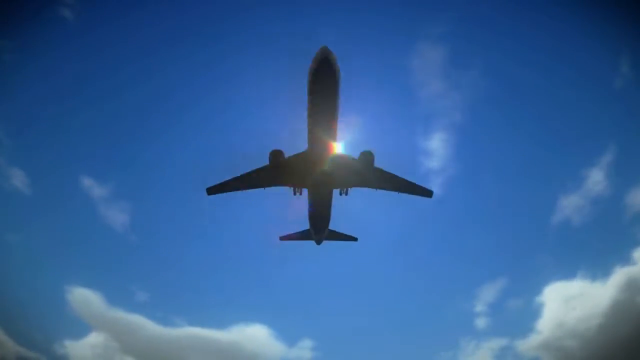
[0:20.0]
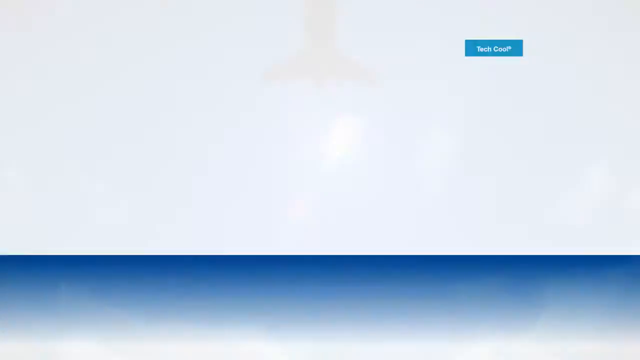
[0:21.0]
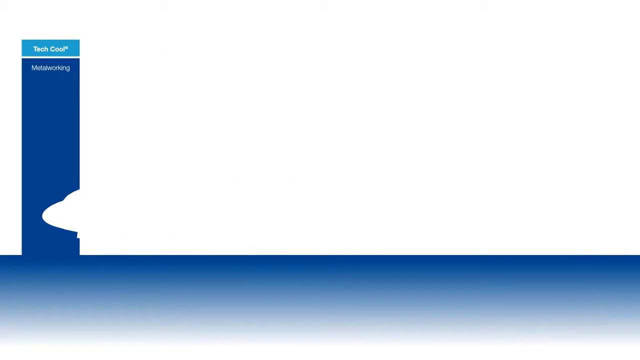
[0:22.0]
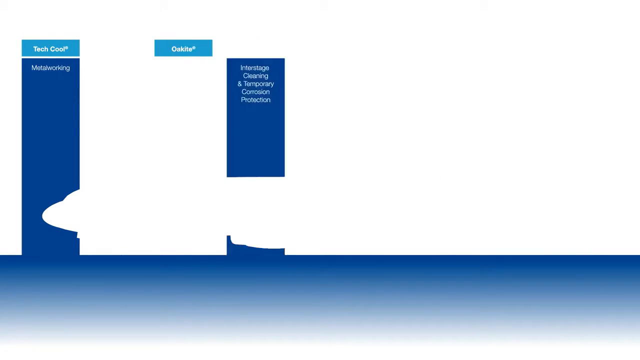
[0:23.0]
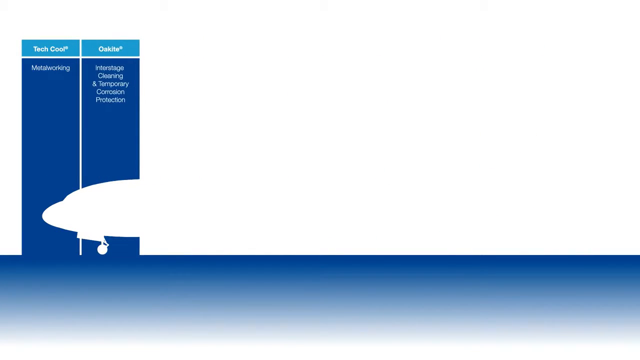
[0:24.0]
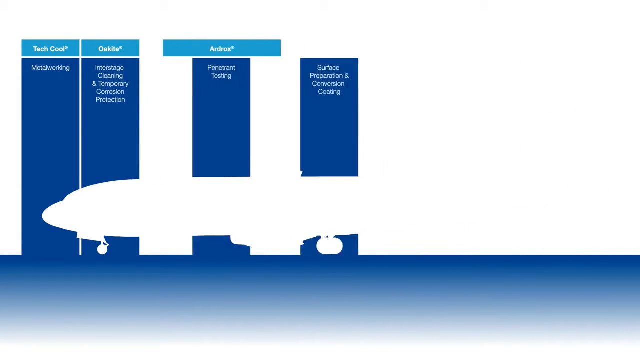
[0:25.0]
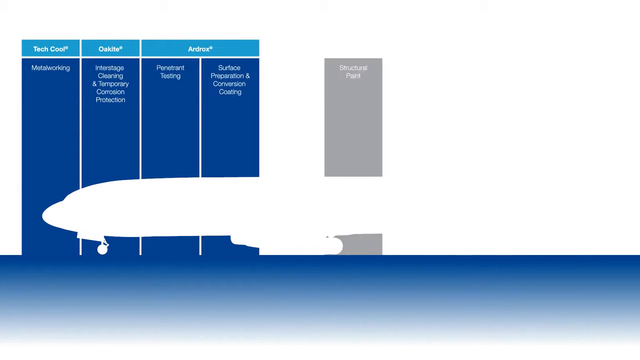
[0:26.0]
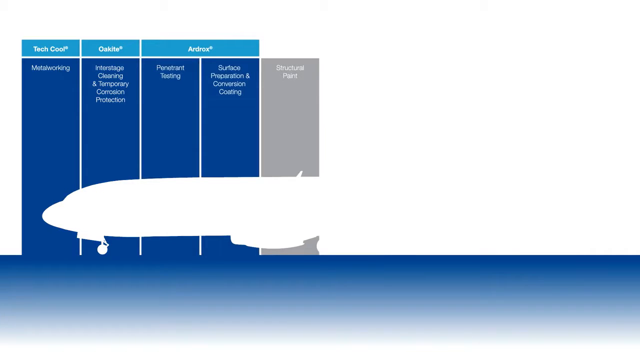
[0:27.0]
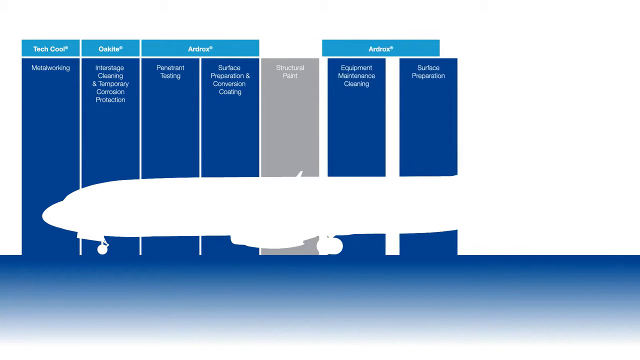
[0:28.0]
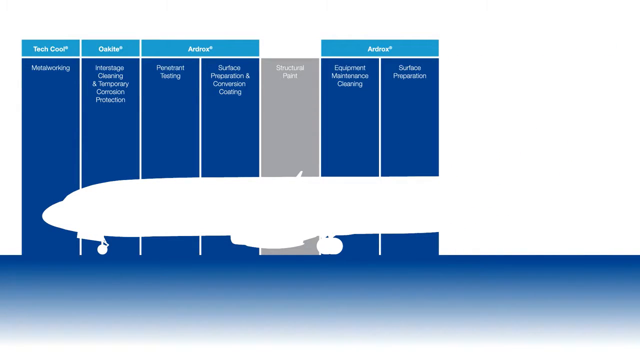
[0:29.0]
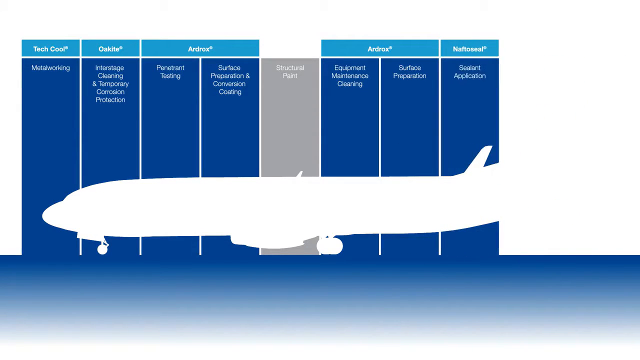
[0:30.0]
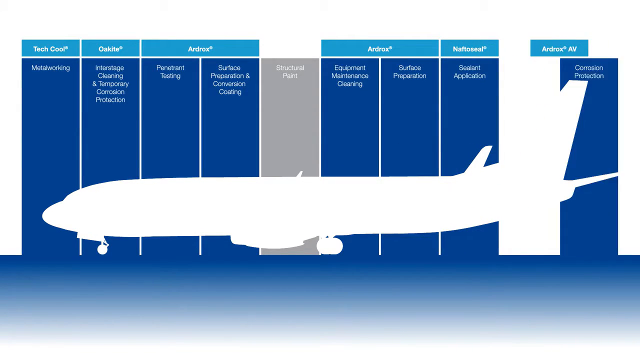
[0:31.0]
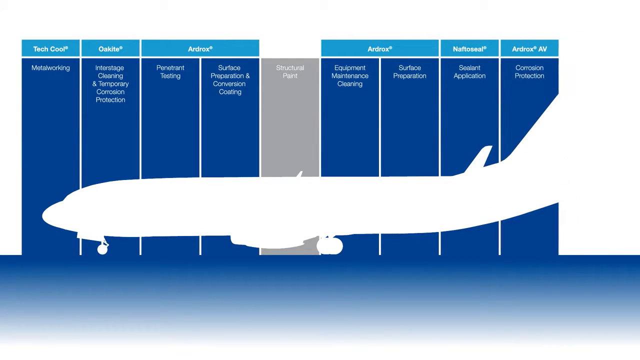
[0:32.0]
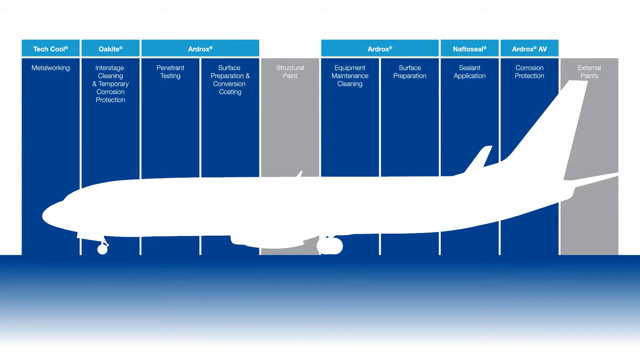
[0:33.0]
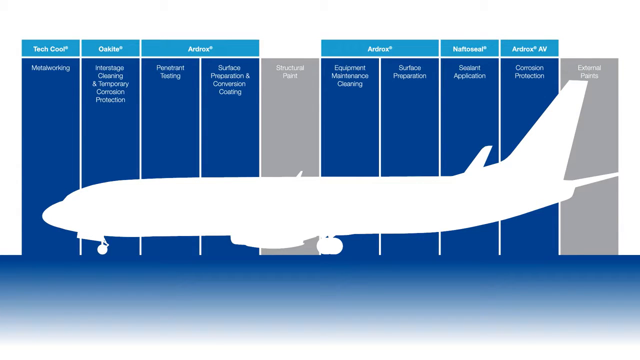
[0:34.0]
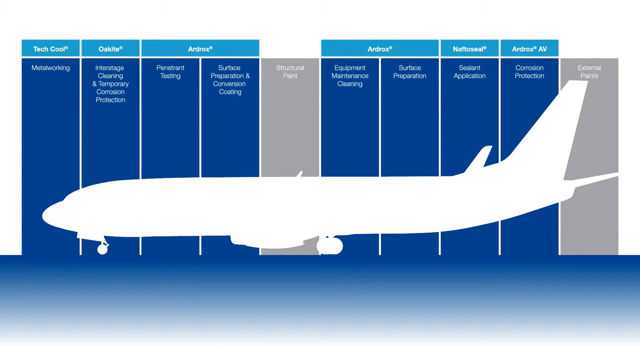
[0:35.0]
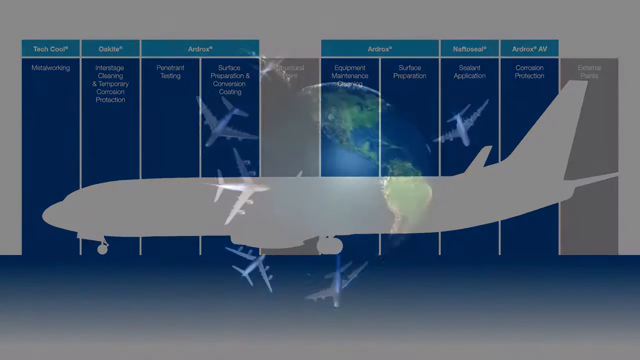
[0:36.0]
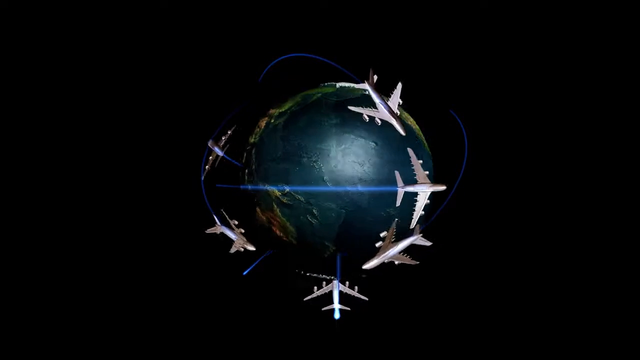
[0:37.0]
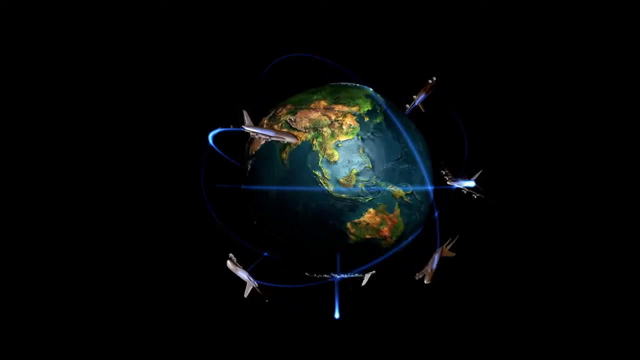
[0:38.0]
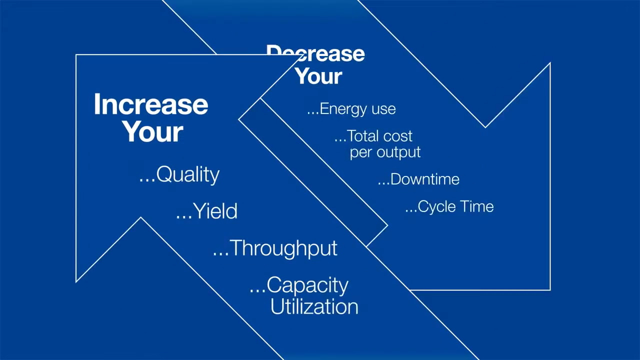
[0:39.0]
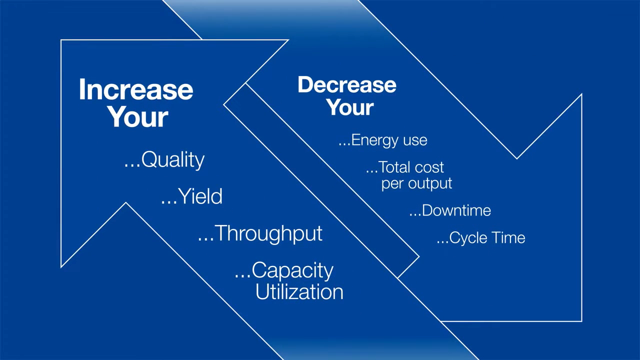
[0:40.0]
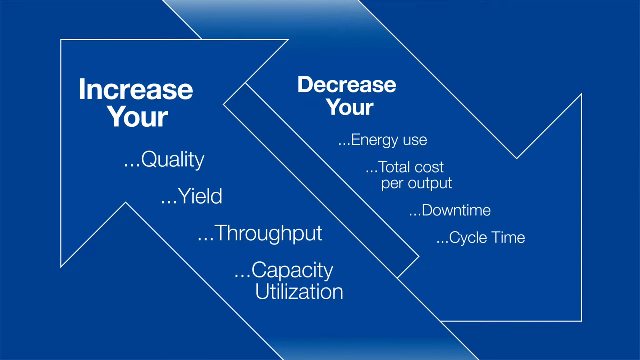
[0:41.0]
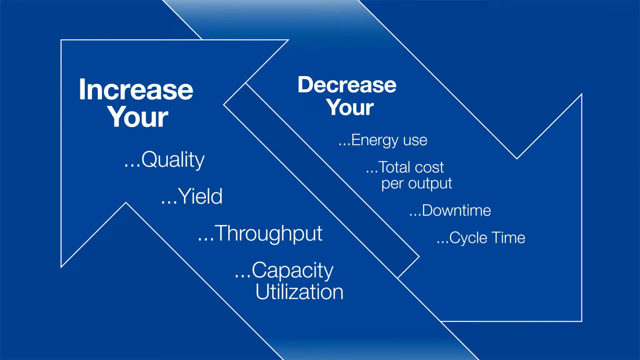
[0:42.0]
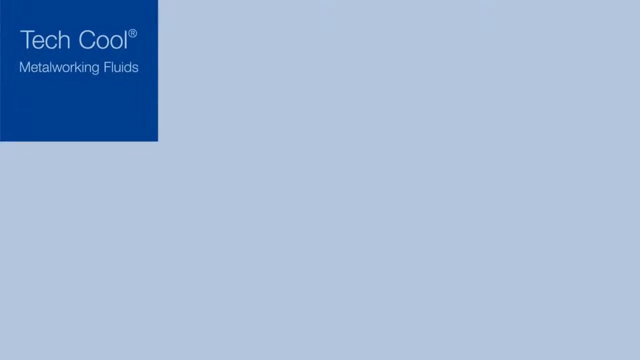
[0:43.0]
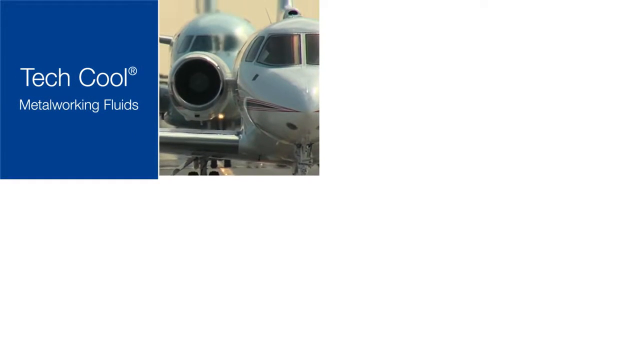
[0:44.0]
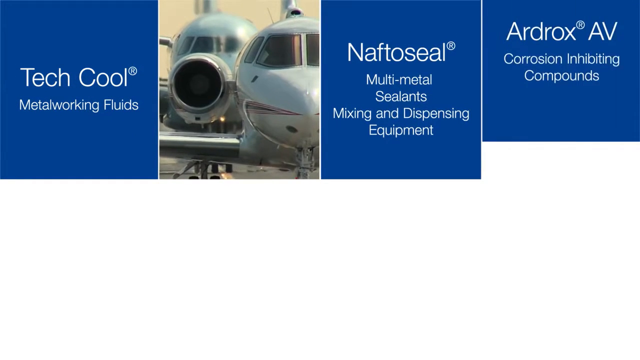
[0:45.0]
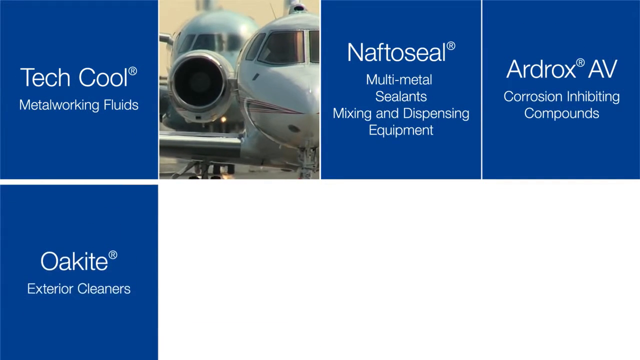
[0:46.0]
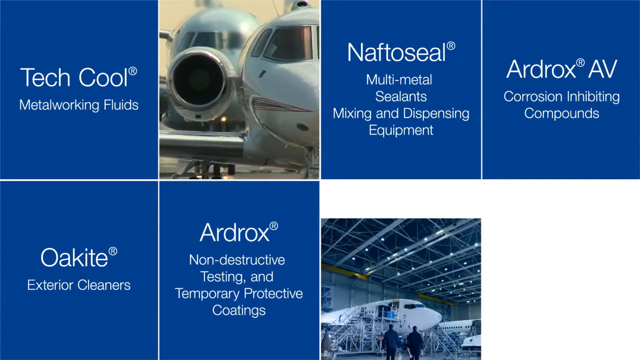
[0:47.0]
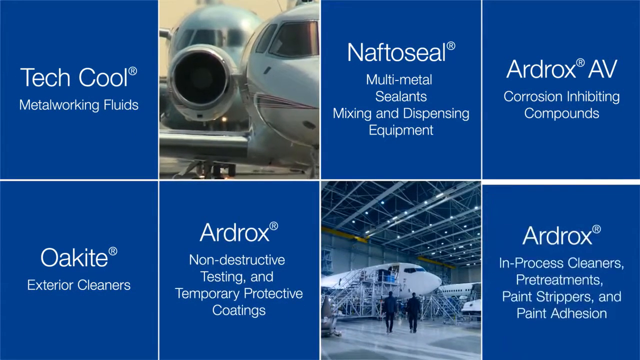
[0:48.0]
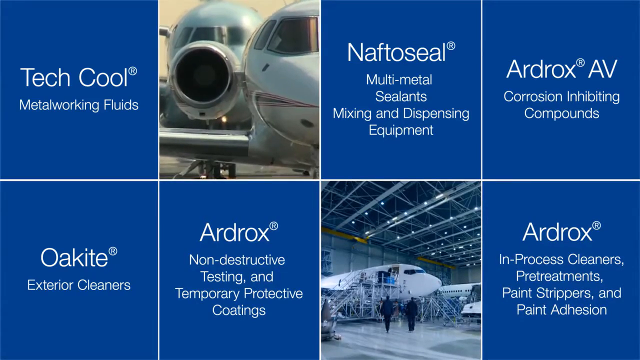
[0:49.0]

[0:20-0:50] An underside view shows an airplane flying through a blue sky with some clouds. The airplane flies out of the camera's view; it looks like it is flying up but is actually flying forward, and the sun reflects off the camera lens as the plane passes. The scene changes to a computer graphic screen, white in the background and blue at the bottom. On the left are some blocks, including a square on the left side that says "Tech Coke"; the other text is too blurry to read. An animated graphic shows rectangular pieces moving to the left, and another set of rectangular pieces joins them, almost like building blocks coming together. As they come together, missing space in the blocks forms a white plane at the bottom, and when all the blocks are together there is a very large plane at the bottom. At the top are categories of different things the blocks represent, and inside all the vertical rectangles is some text. The video stays there for a while. It then changes to a 3D animated image of the Earth spinning in circles, with a bunch of airplanes flying around the globe. Next comes a blue screen with an arrow pointing to the upper left corner and another arrow coming down from the top pointing to the bottom right corner. The arrow on the left says "Increase your quality, yield, throughput, and capacity utilization." The other arrow says "Decrease your energy use, total cost per output, downtime, and cycle time." The video stays there for a while. Then animated blocks fall down from the top, pulled down. On the left side one says "Tech cool, metal working fluids"; next is a picture of a couple of airplanes; then one says "NAFTO seal, multi-metal sealants, mixing and dispensing equipment"; and on the right one says "Ardrox, AV, corrosion inhibiting compounds." Then blocks pop up from the bottom. The one on the left says "Okite, exterior cleansers." The next says "Ardrox, non-destructive testing and temporary protective coatings." The next is a picture of an airplane, a hangar and some steps connected to the airplane. The one on the right says "Ardrox, in-process cleaners, pretreatments, paint strippers, and paint adhesion."